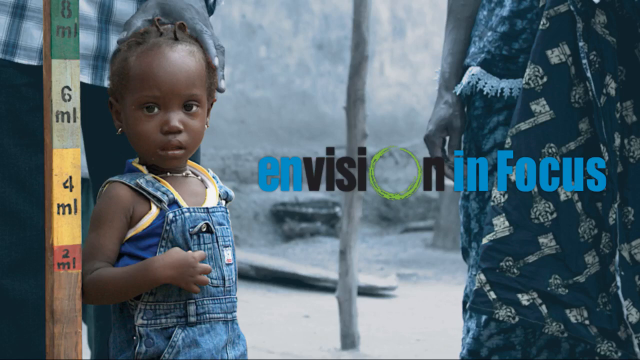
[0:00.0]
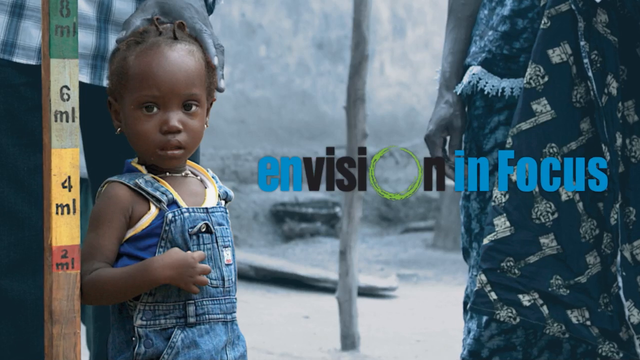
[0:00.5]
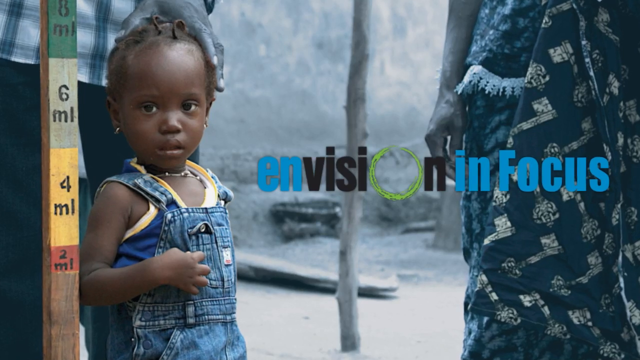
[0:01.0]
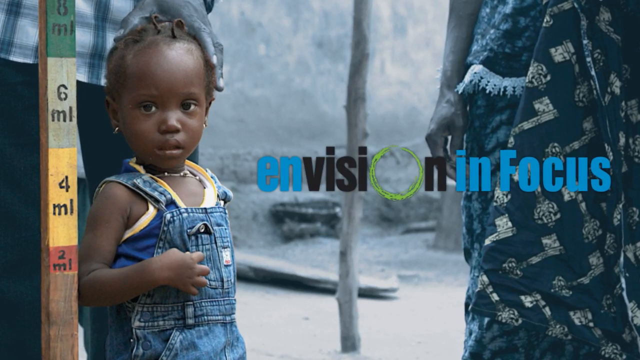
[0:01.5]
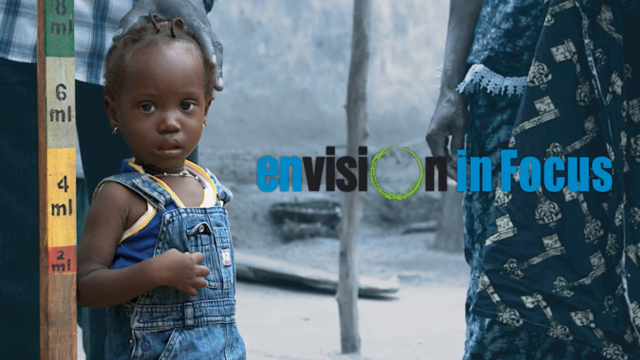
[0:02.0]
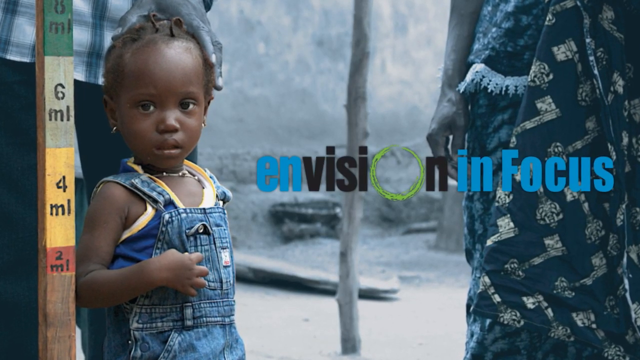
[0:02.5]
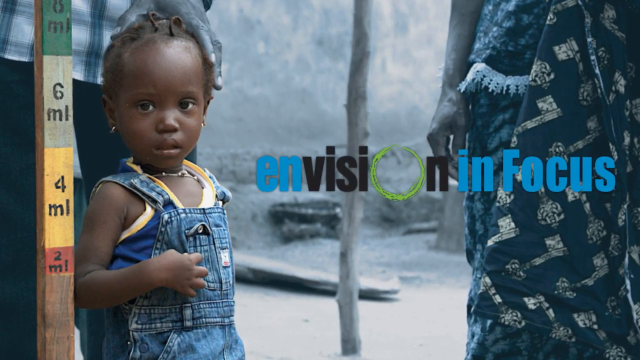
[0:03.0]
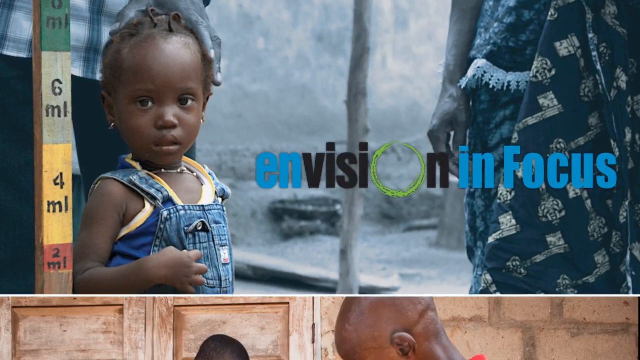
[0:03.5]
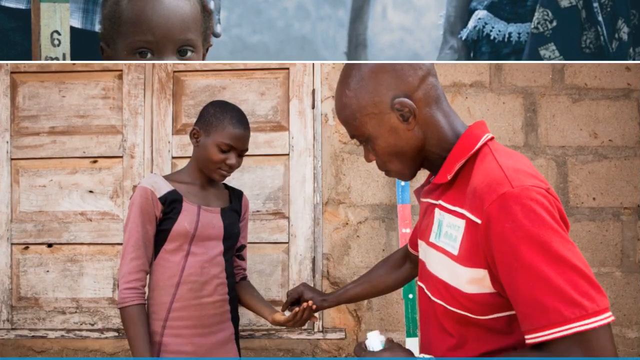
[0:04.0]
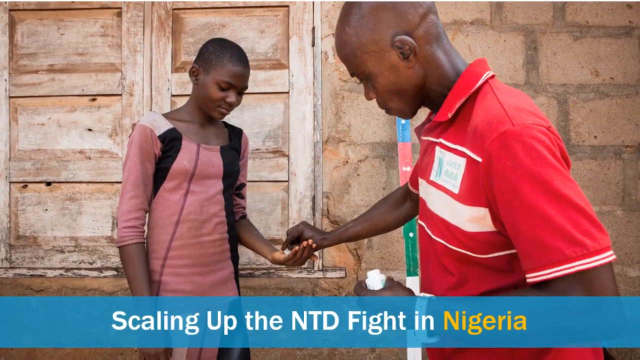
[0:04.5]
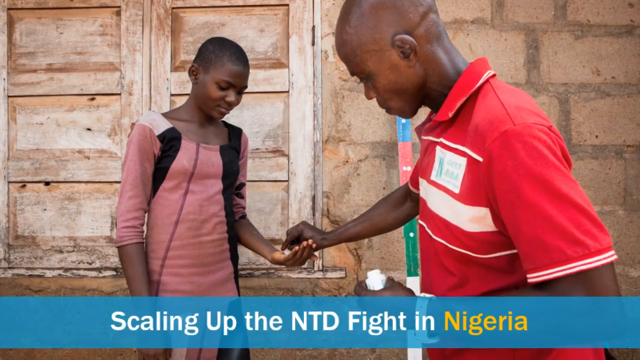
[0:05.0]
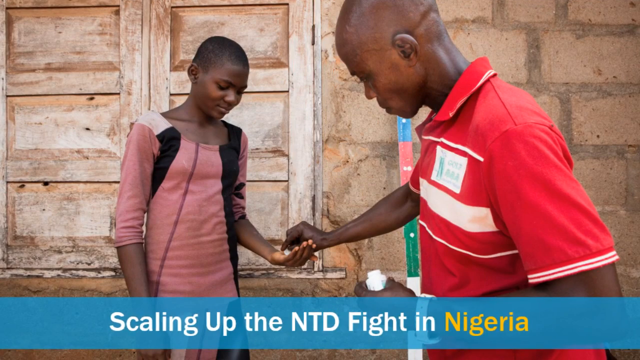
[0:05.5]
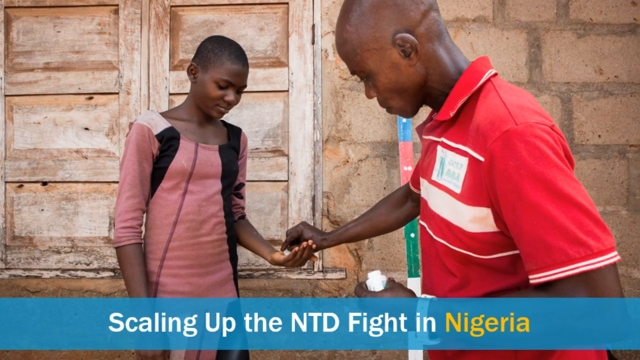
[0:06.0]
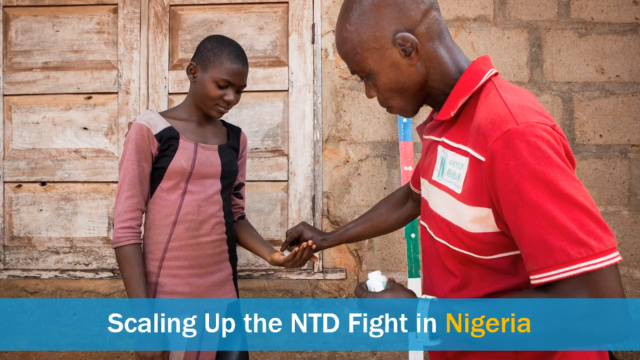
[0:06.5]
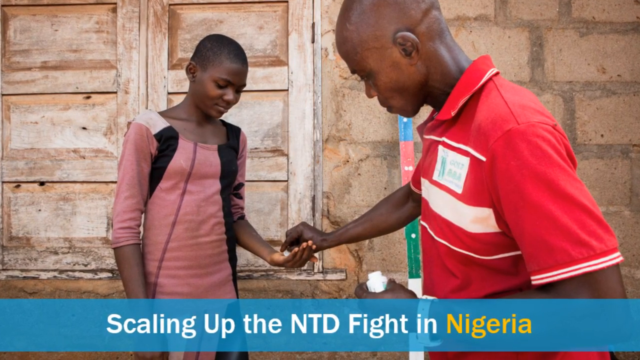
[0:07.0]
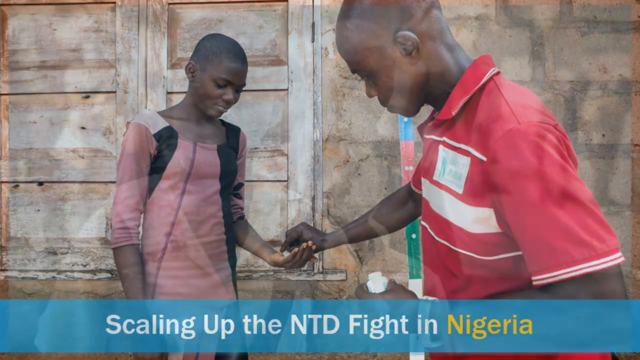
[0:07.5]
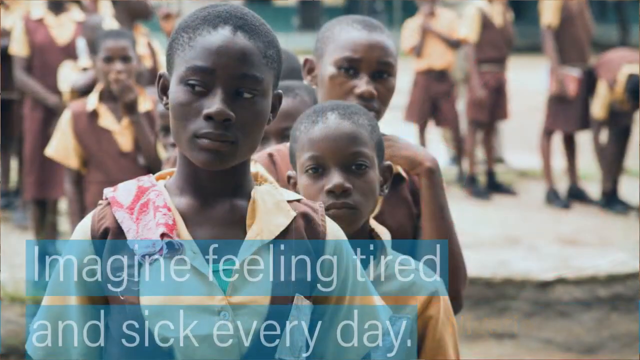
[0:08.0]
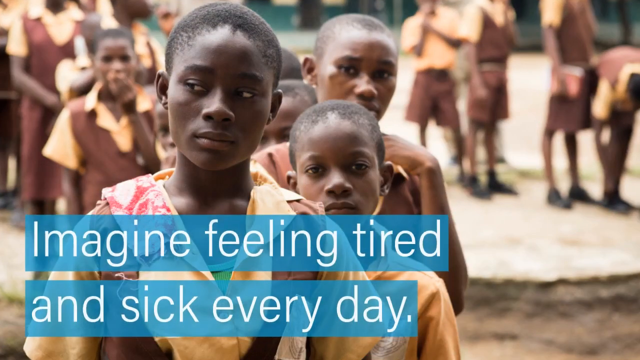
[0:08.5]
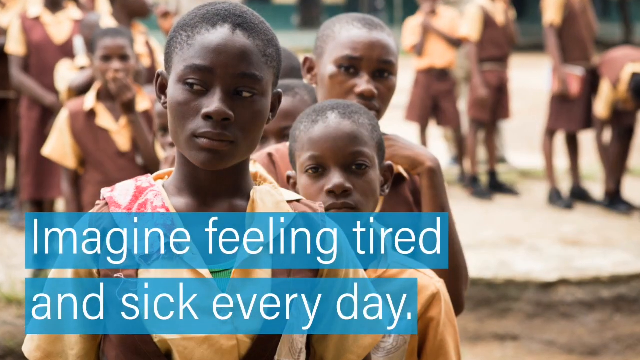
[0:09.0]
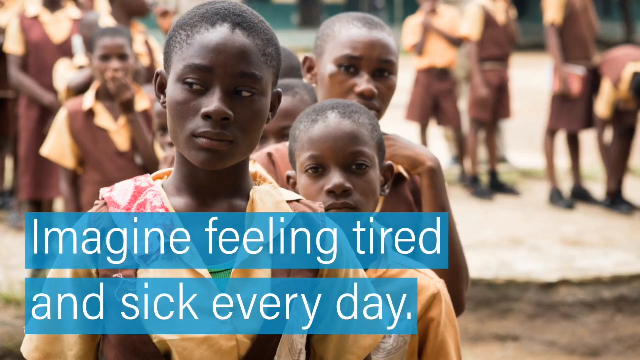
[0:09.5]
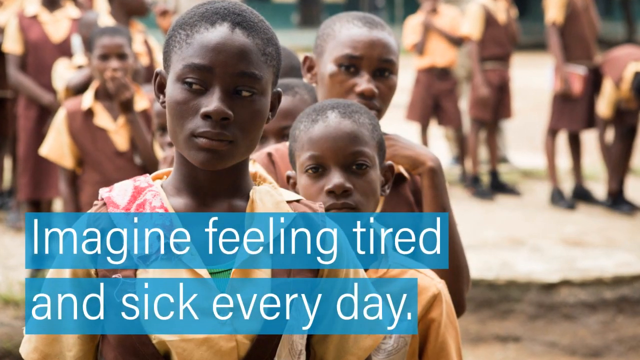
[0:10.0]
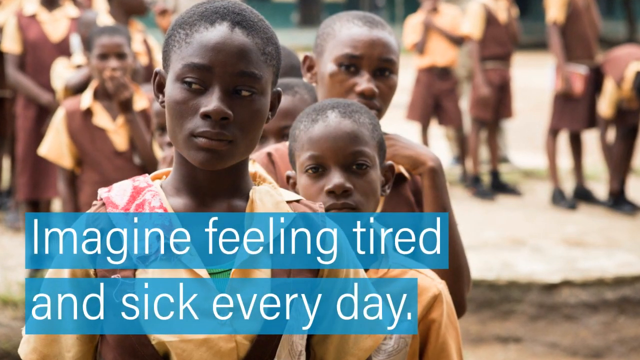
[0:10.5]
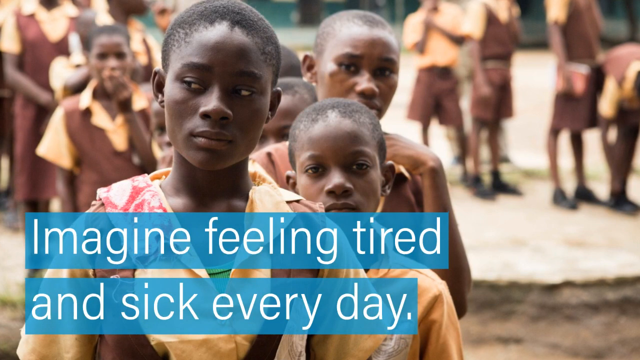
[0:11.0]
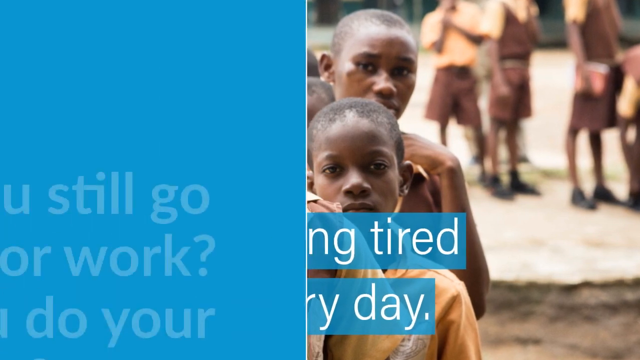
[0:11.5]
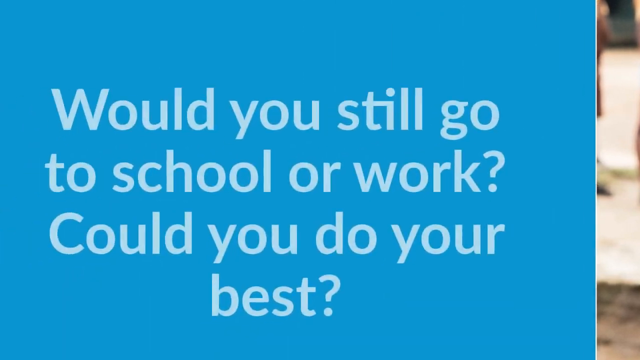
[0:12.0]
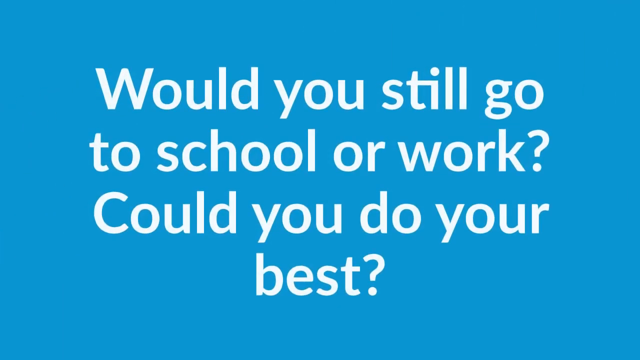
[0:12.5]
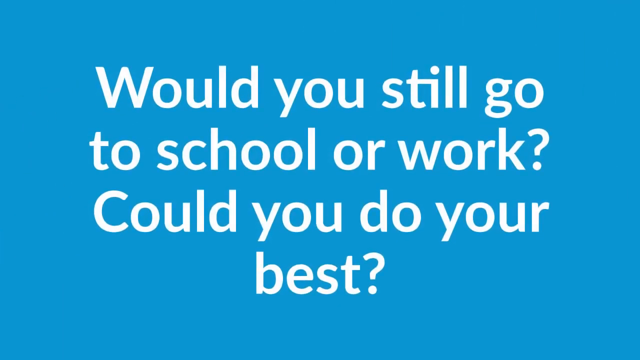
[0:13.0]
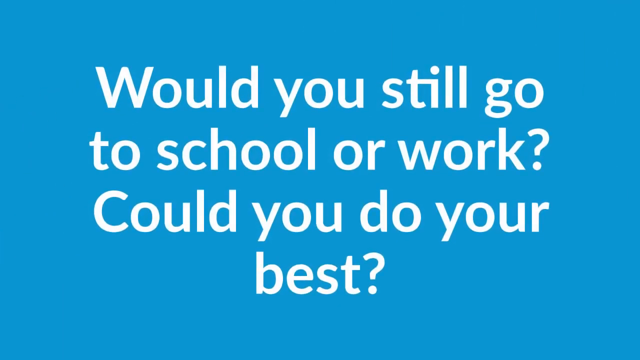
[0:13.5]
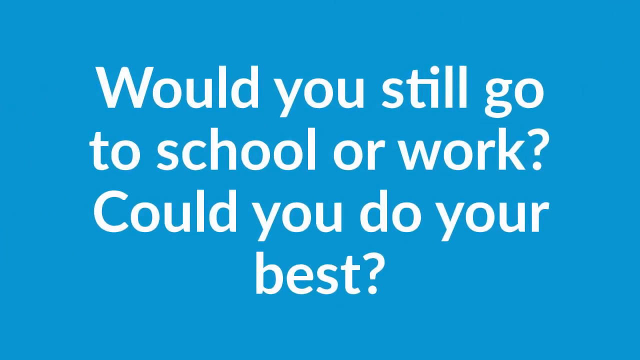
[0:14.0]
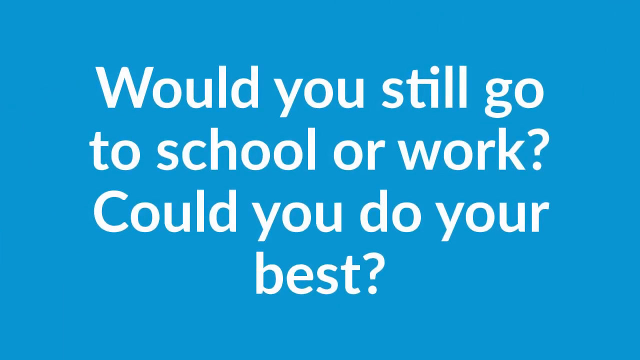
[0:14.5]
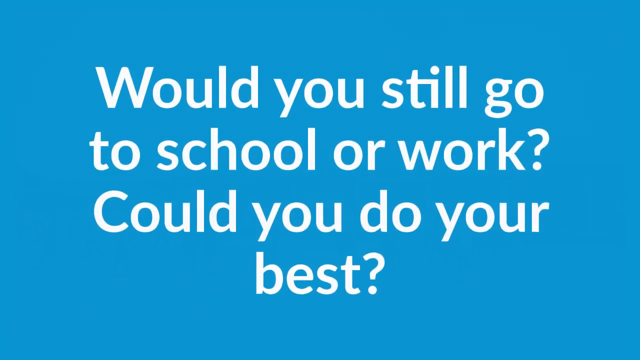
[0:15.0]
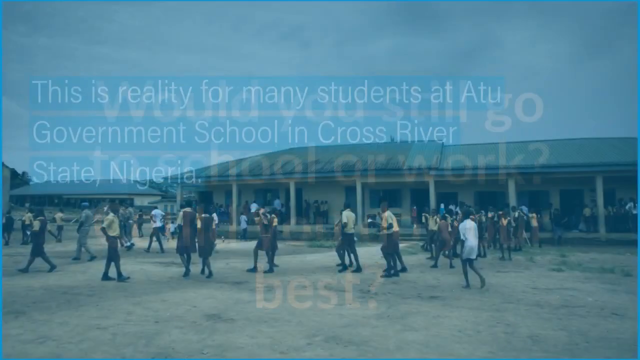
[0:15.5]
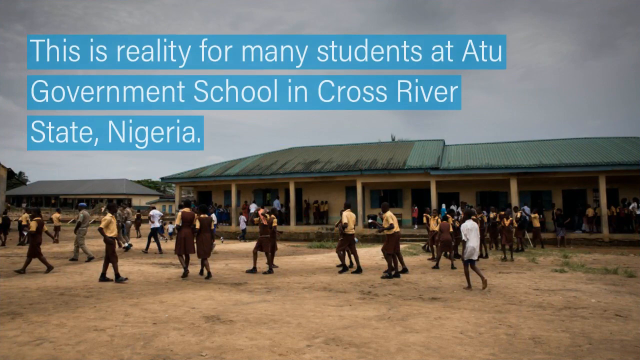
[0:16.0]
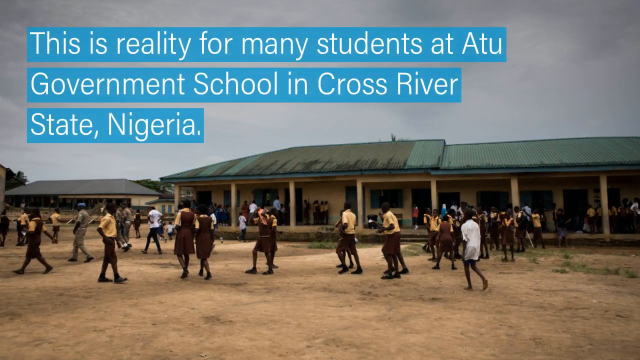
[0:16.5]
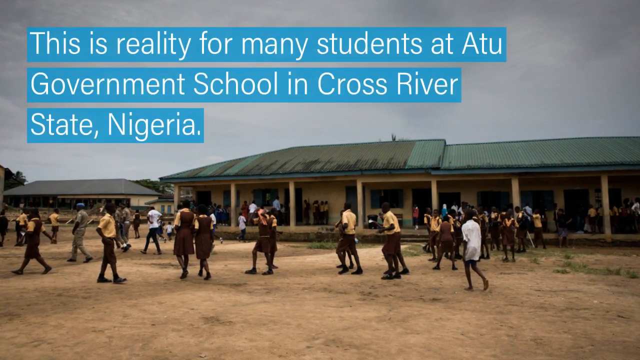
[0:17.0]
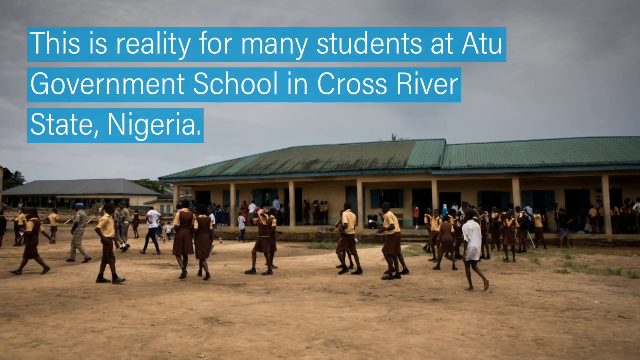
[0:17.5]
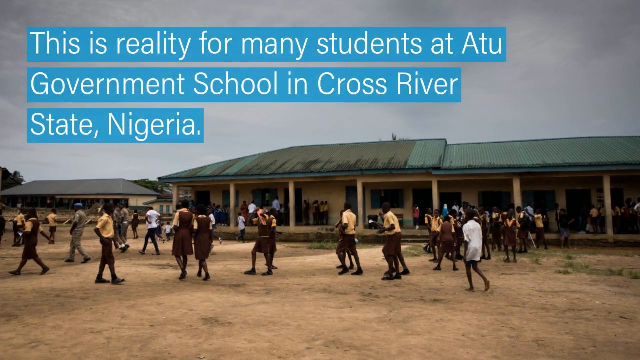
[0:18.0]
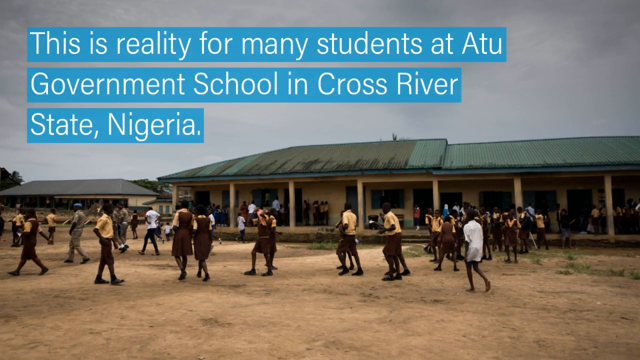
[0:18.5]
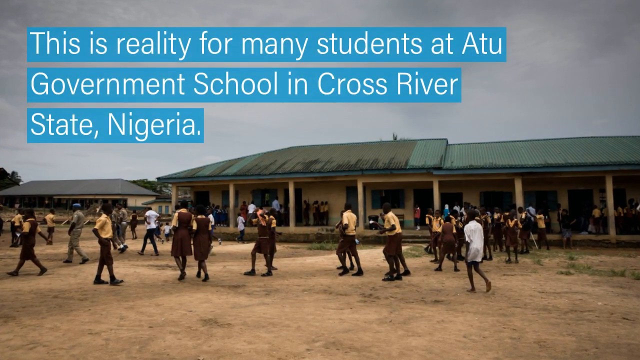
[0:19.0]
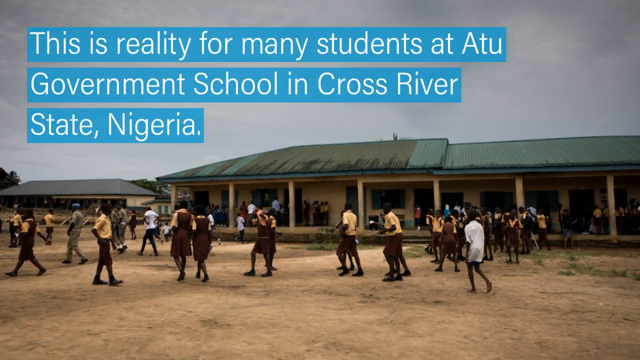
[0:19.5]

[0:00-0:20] A still photograph opens the video, apparently set in Africa. A little girl on the left is seen from the waist up, wearing denim overalls with a blue shirt beneath. She looks at the camera, appears to have earrings, and has short hair. To her left is something like a ruler standing vertically, marked in milliliters in rather big letters: "2ml, 4ml, 6ml, 8ml". In the middle center of the image is a logo that says "Envision in Focus". Most of it is light blue; the word "vision" is black, except the O, which is like a yellow corona, slightly burning. Everything is lowercase except the F in "focus". The view zooms in slightly on the image, and a new image seems to arise from the bottom of the screen. It is a photograph of two people, apparently in Africa: a man in a cherry red polo shirt with white stripes reaches out his right hand and places something in the left palm of what looks like a woman in a sort of salmon-colored basic dress. Both have very short hair. The background is like a brick wall with a wooden doorway in it. The caption below says "Scaling up the NTD fight in Nigeria". Another image shows more African faces, apparently children lining up in a line toward the camera, with overlaid white text on a blue background: "Imagine feeling tired and sick every day". The entire screen then becomes a light blue background with the text "Would you still go to school or work? Could you do your best?" Next comes an outdoor photograph, taken from further away, of a couple of one-story buildings with pitched roofs and a bunch of people walking around in front. Some of them seem to be in sort of dark uniforms with yellow sleeves, possibly high school students in Nigeria.